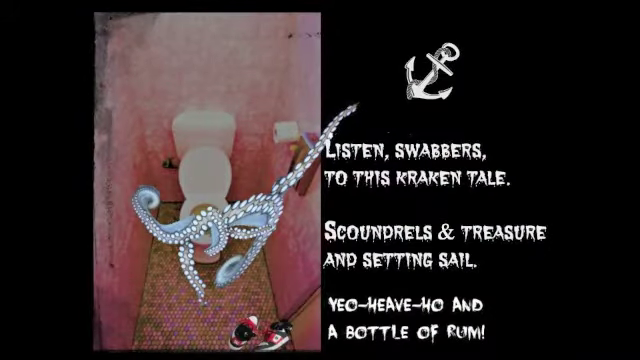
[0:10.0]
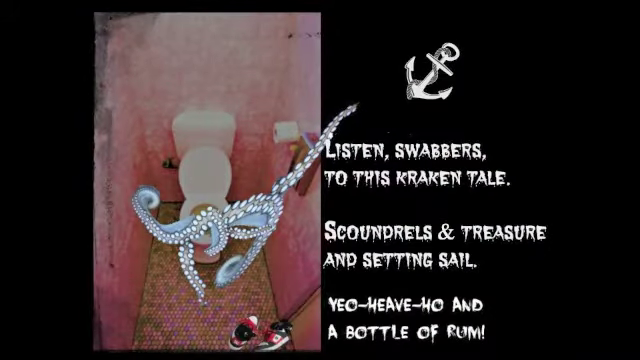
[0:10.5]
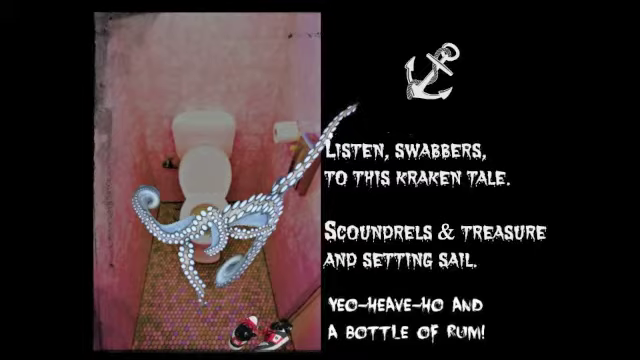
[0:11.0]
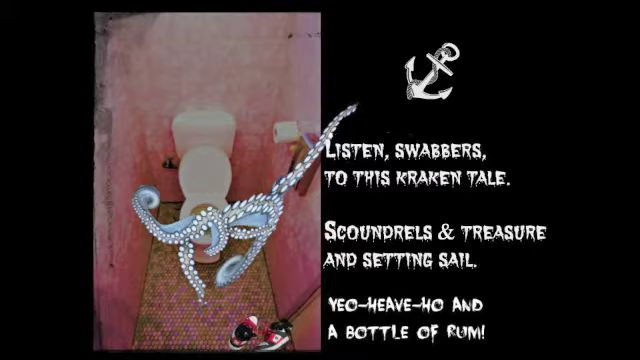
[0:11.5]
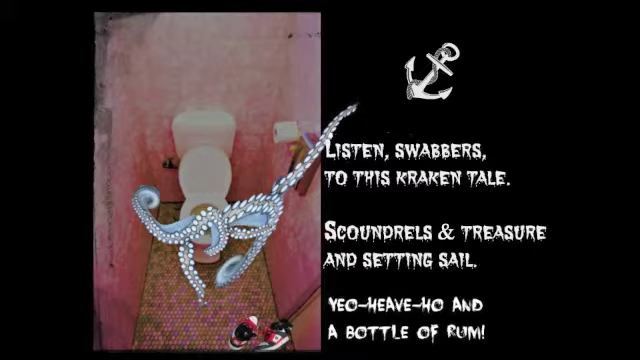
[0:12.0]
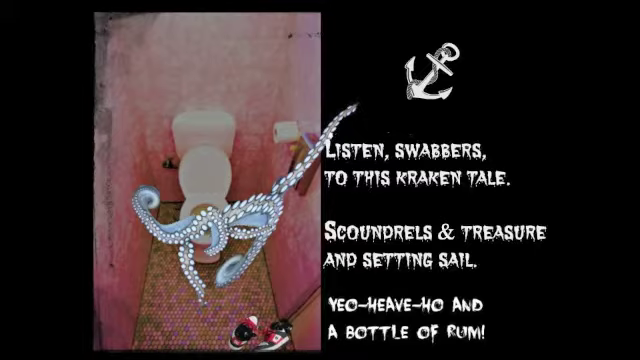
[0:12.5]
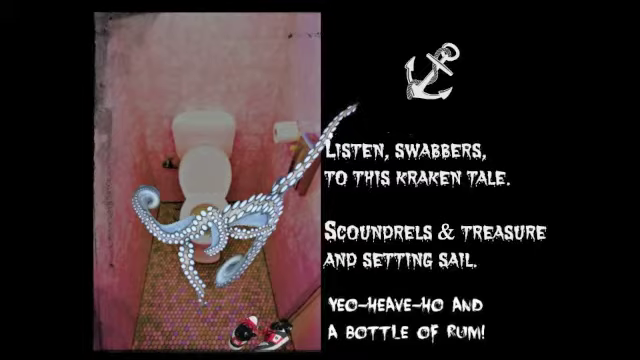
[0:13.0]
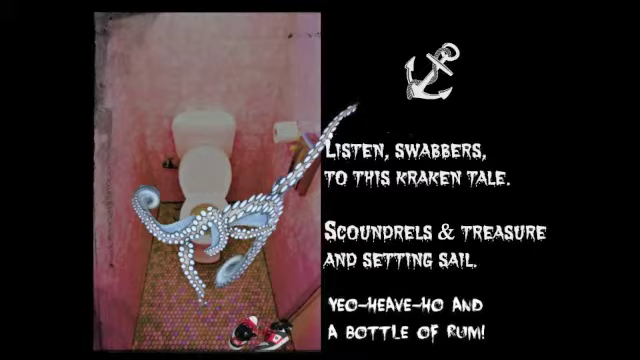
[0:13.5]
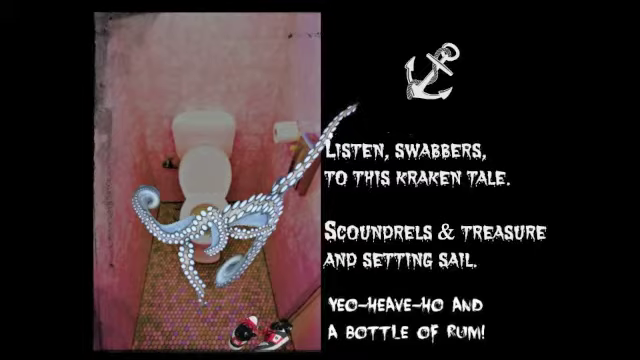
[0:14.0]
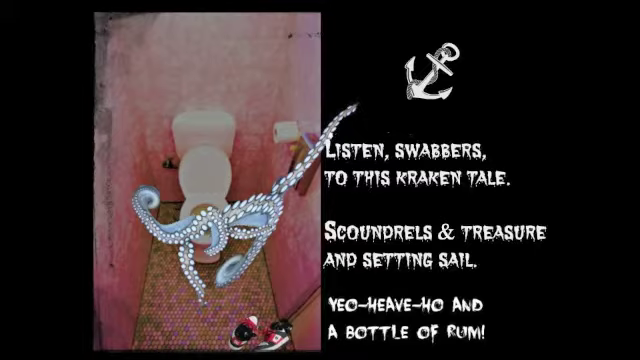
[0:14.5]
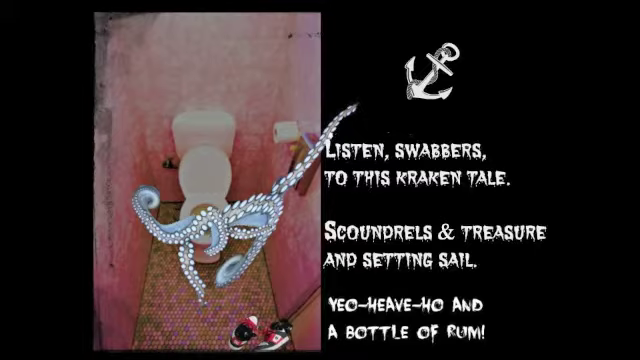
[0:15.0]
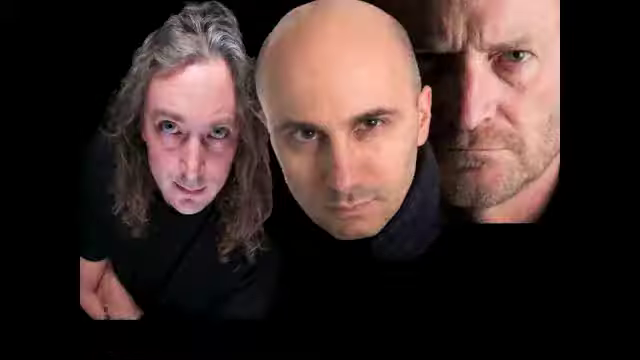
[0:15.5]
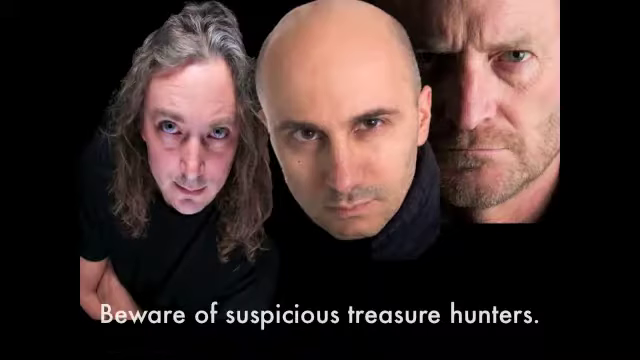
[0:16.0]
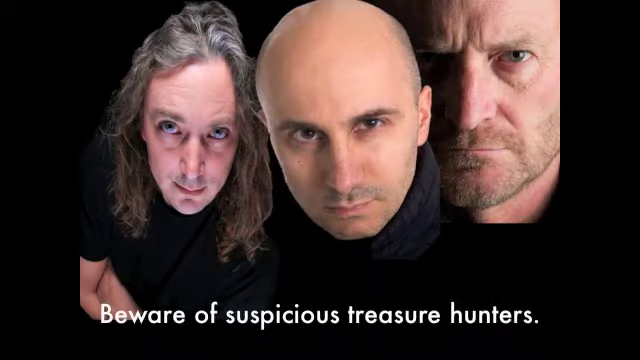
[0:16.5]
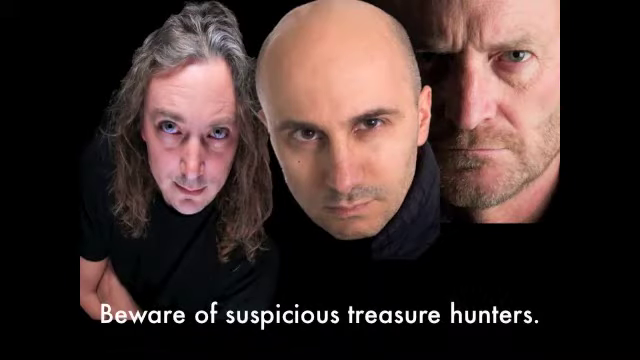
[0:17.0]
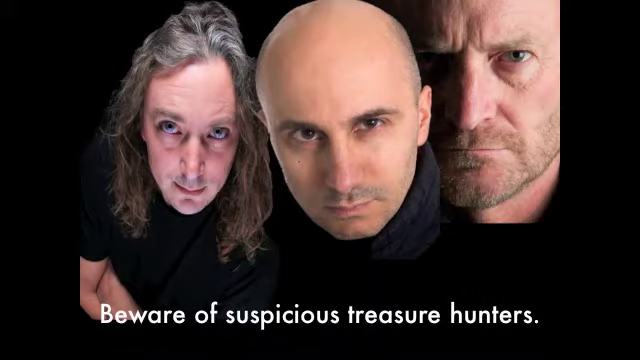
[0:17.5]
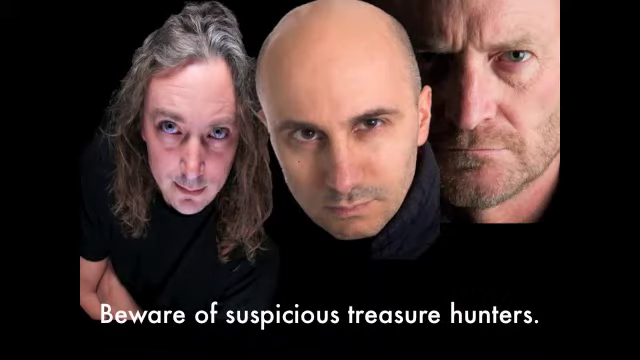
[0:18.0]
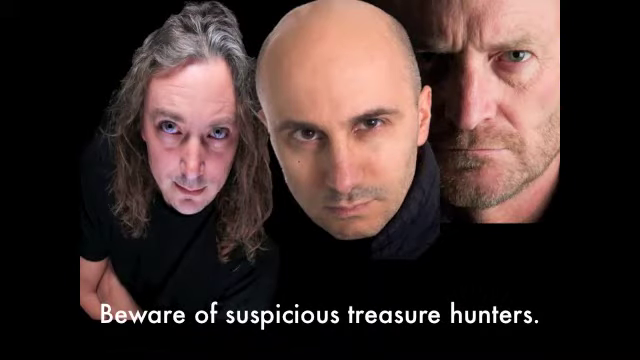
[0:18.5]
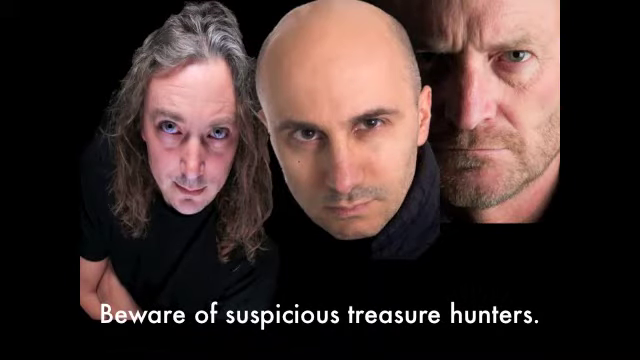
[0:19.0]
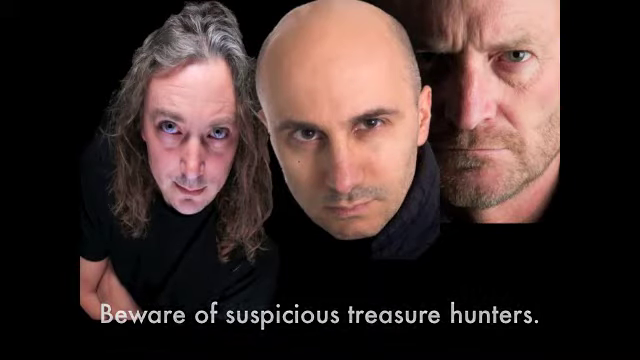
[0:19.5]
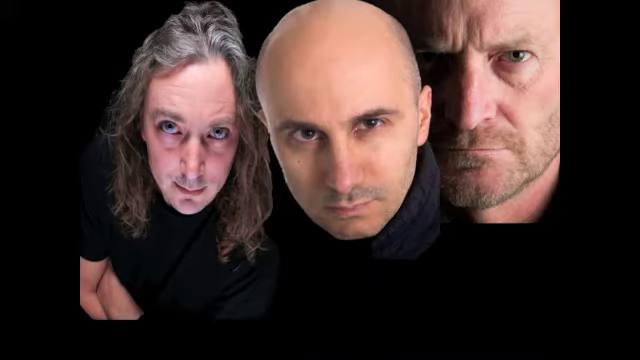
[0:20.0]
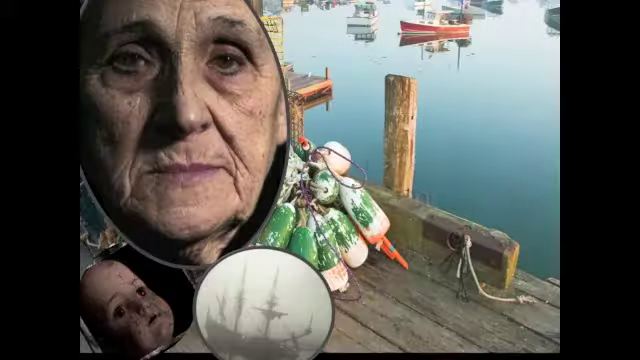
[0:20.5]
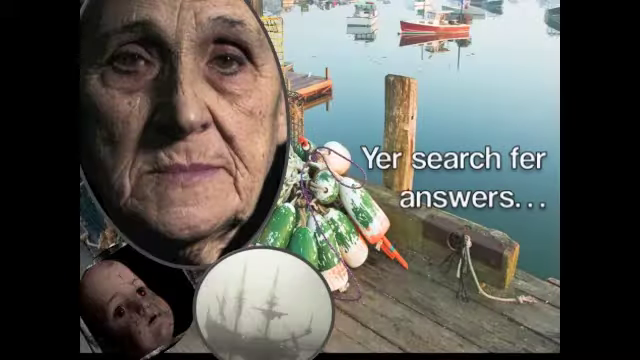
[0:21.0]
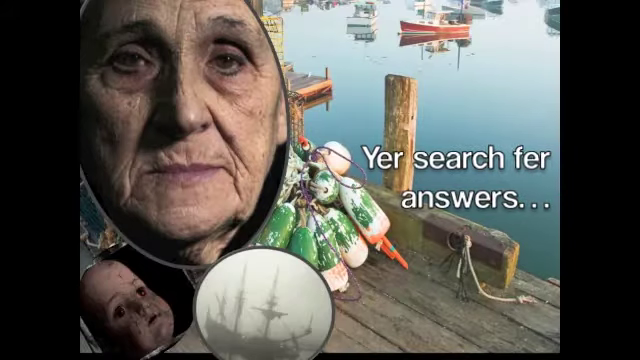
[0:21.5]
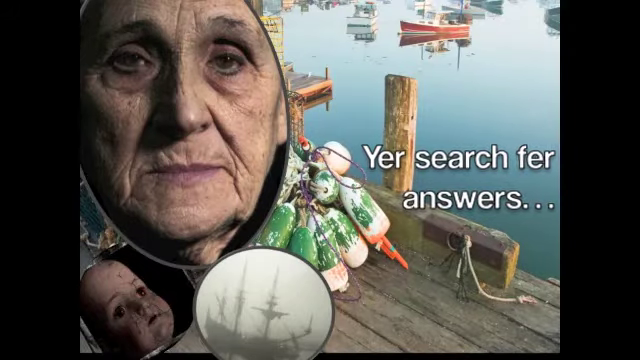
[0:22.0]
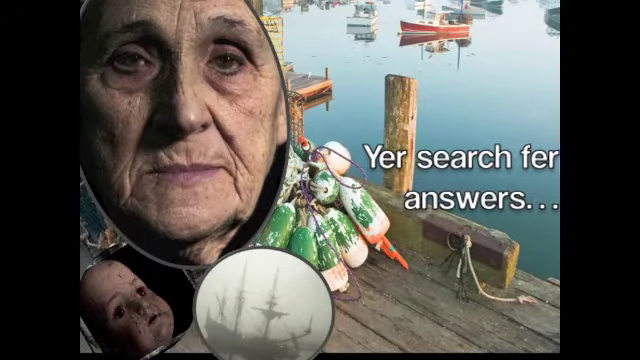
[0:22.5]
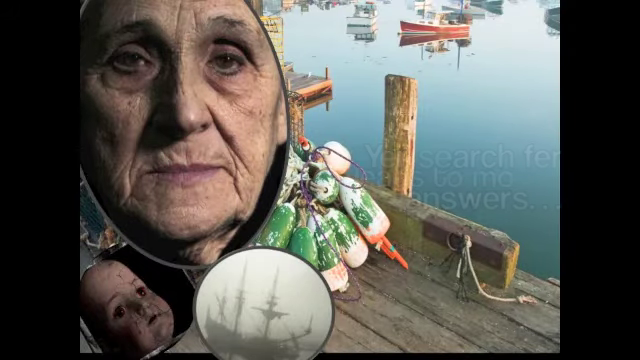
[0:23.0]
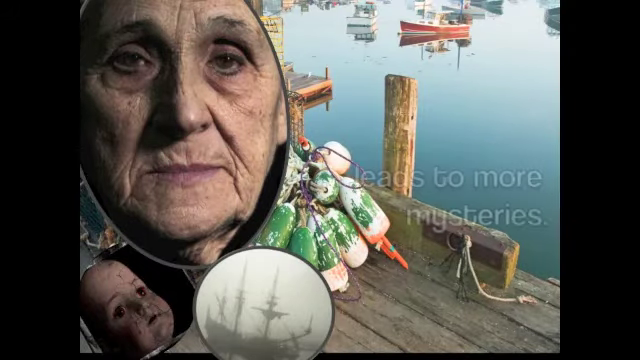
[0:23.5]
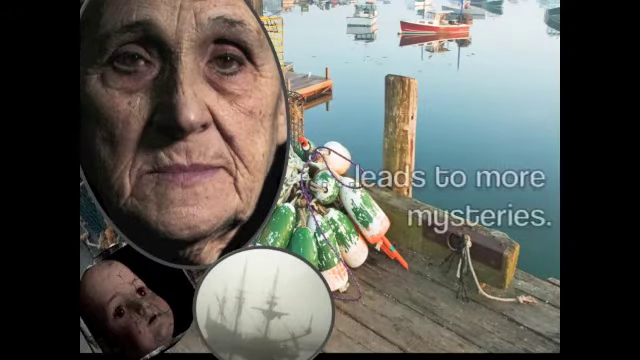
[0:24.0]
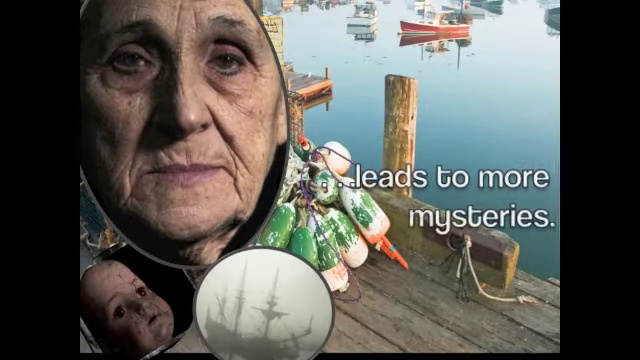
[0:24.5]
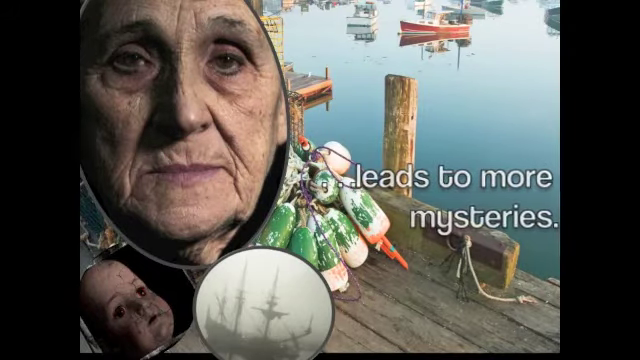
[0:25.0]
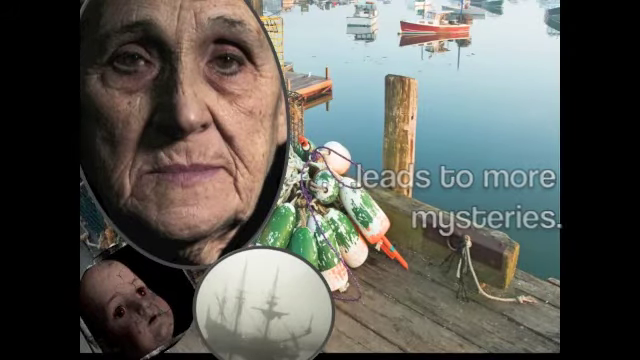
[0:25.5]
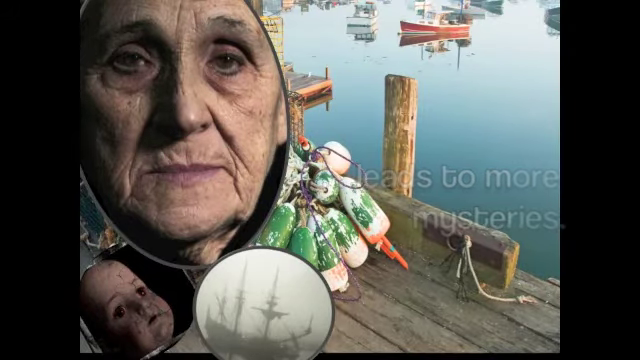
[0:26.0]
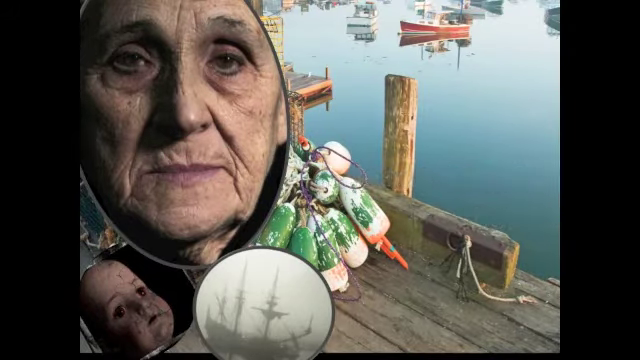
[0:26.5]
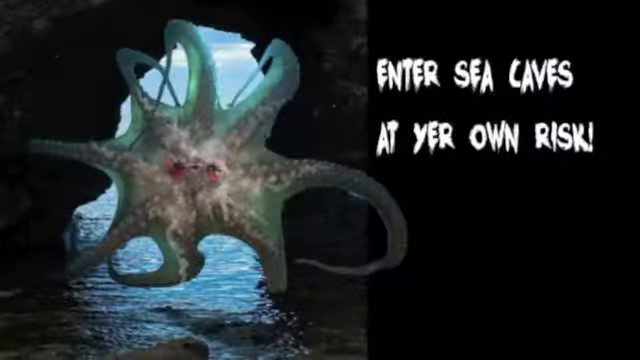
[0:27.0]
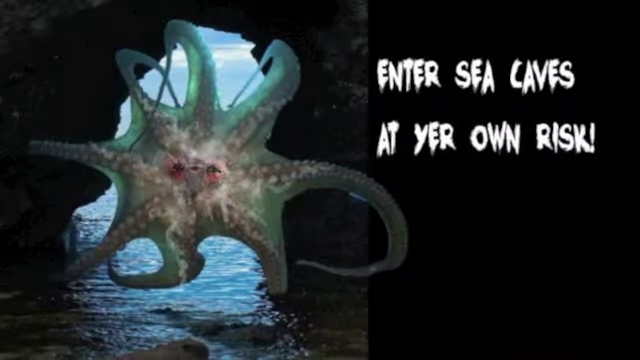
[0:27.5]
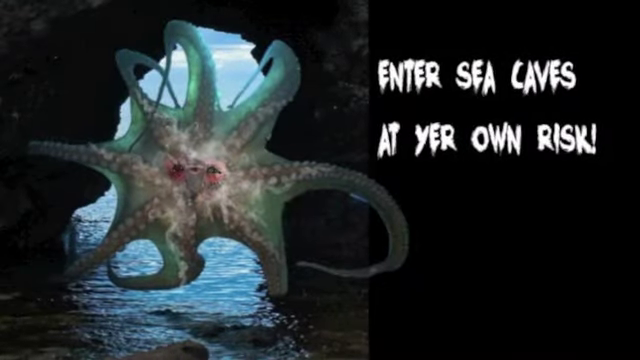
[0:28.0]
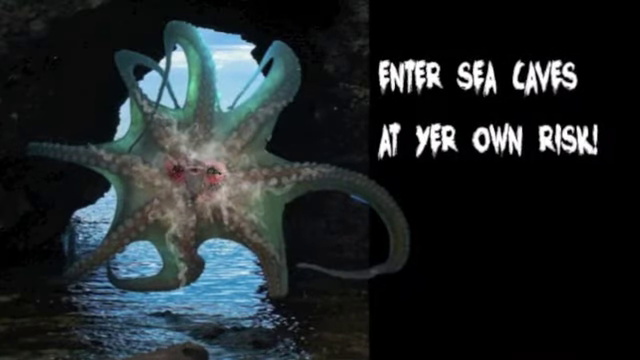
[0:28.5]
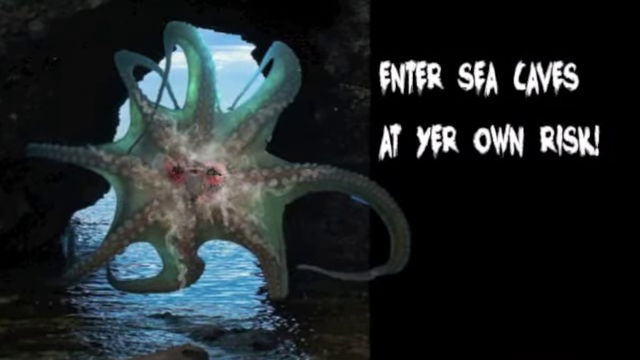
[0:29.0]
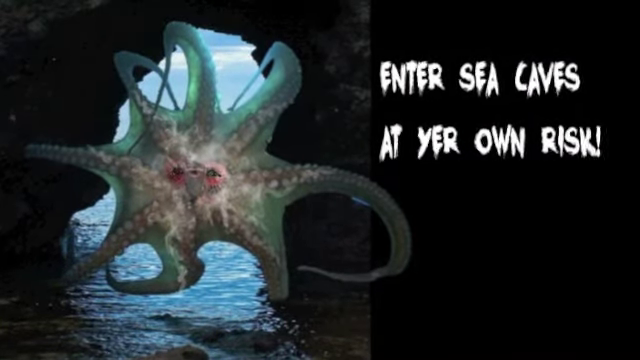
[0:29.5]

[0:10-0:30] At the bottom of the image there is also a pair of sneakers, which look scaled down from a larger image and appear to be put on top of the image and background, not on the same layer as the toilet, similar to the kraken. The video then cuts to stock footage of three middle-aged men, one possibly older, maybe in his 50s, with gray hair on top. They have intense facial expressions, and white text at the bottom reads "beware of suspicious people". Next comes footage of an elderly woman in an oval portrait locket on a ship, with a picture of a baby doll below her to the left, a foggy ship to the right, and text on the right side of the screen about mysteries to beware. The screen then cuts to a picture of a kraken blocking a sea cave, with "enter sea caves at your own risk" on the right-hand side.